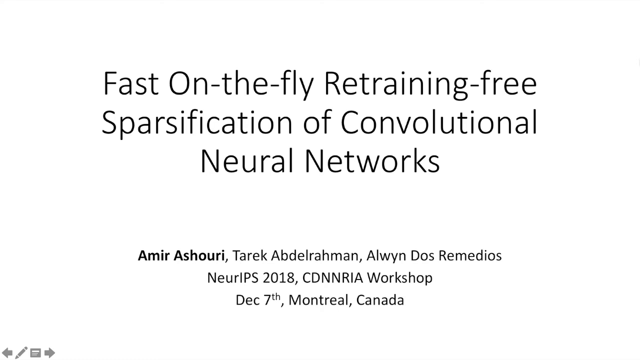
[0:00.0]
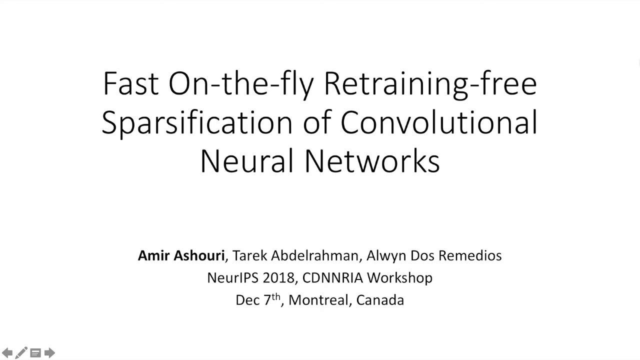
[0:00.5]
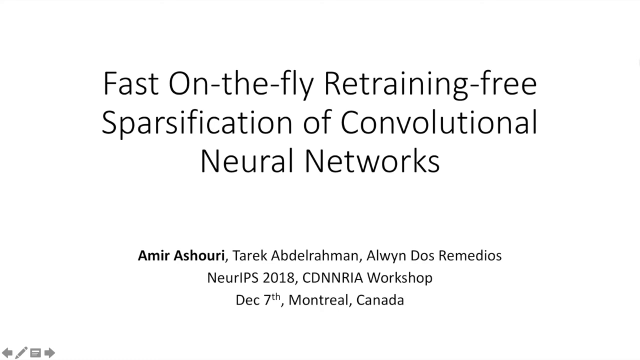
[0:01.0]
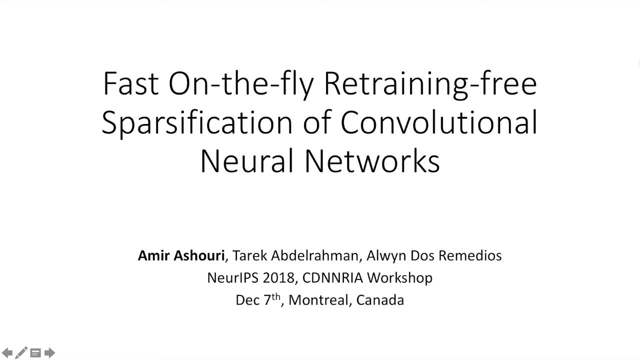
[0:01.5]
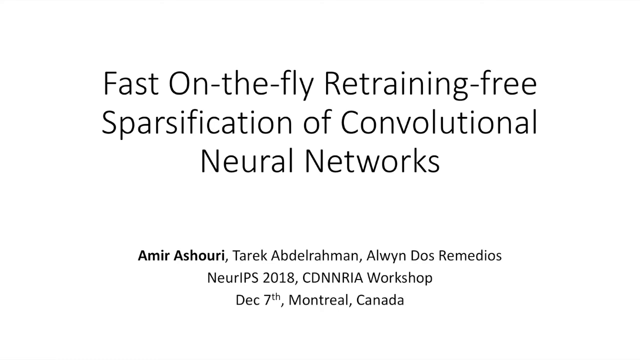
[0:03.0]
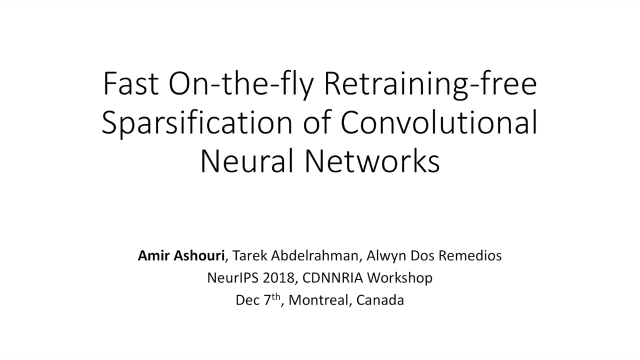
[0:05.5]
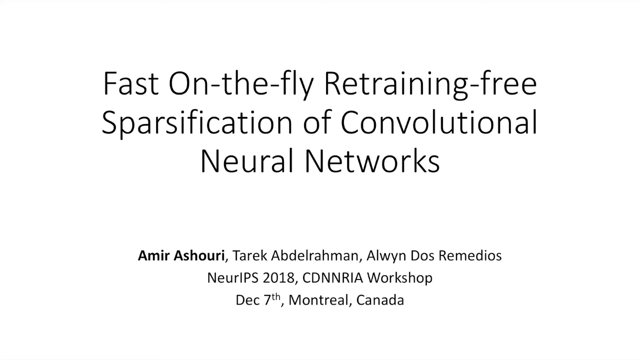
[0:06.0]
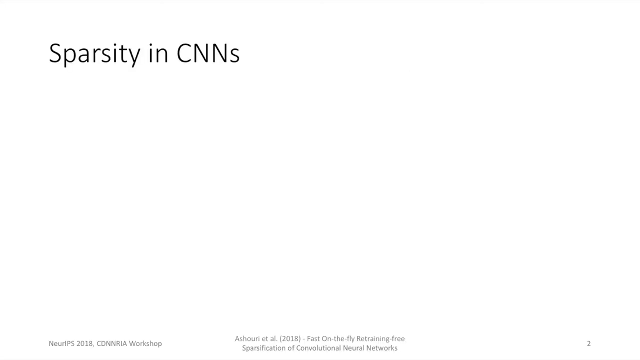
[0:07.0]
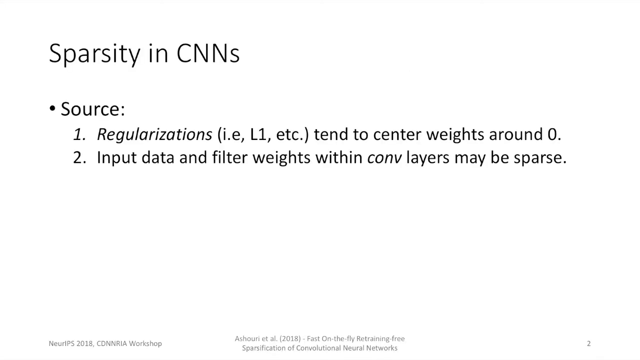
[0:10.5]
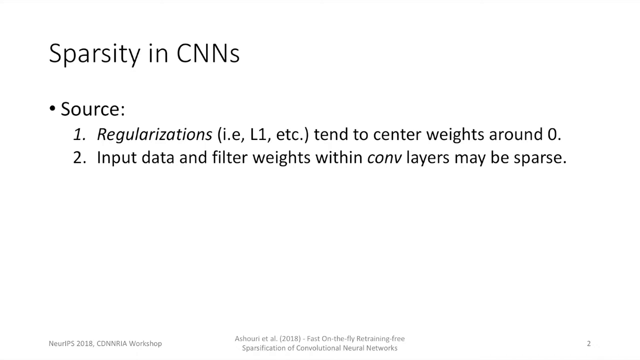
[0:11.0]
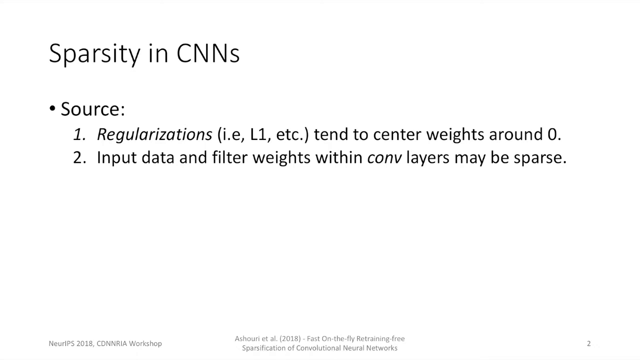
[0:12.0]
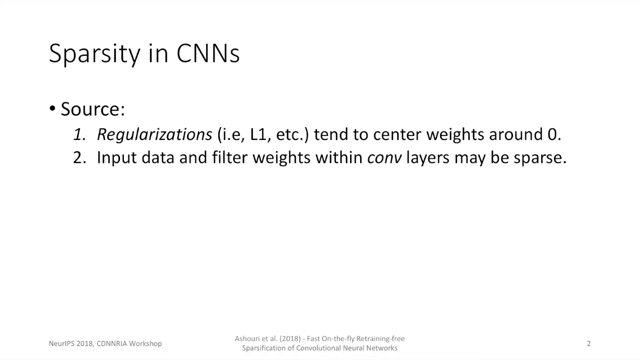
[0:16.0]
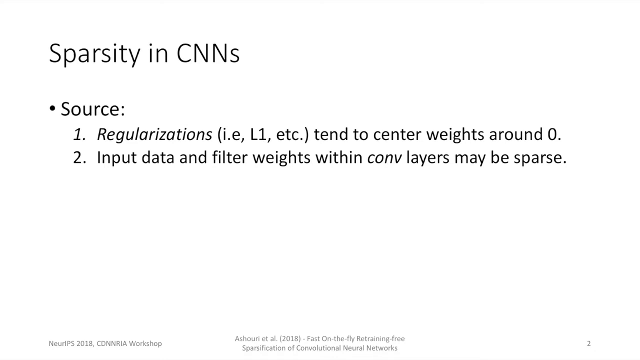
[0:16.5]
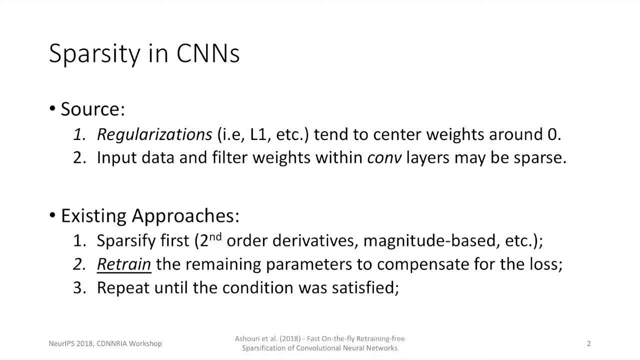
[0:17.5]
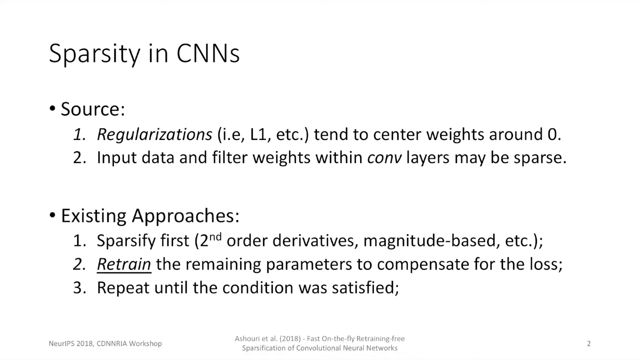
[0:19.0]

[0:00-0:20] The video opens on an all-white background with the words "fast on the fly, retraining free, specification of convolutional neural networks." Underneath, the names Amar, Ashuri, Tarek and Alwendos Remedios are written, along with the year 2018. Next comes a slide on sparsity in CNNs listing the sources: first, "regularizations tend to center weights around zero," and second, "input data and filter weights within convolutional layers may be sparse." Under existing approaches, the first is to specify first using second order derivatives, magnitude based and more; the second is to "retrain the remaining parameters to compensate for the loss"; and the third is to "repeat until the condition was satisfied." The presentation is from the CDNNRIA workshop on December 7th in Montreal, Canada. All the slides have a white background that turns light silver and then black toward the bottom, with the silver and black confined to the last fifth of the slide.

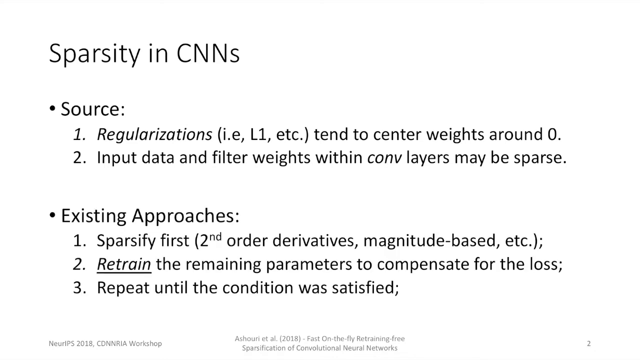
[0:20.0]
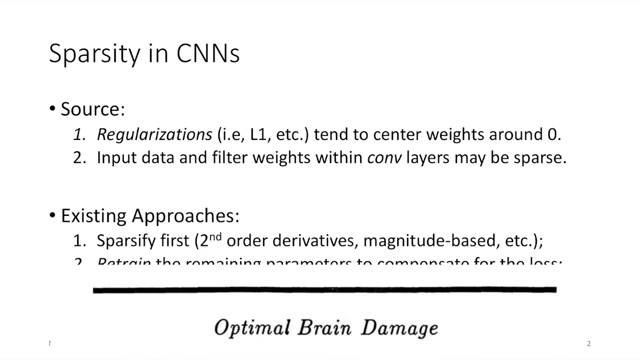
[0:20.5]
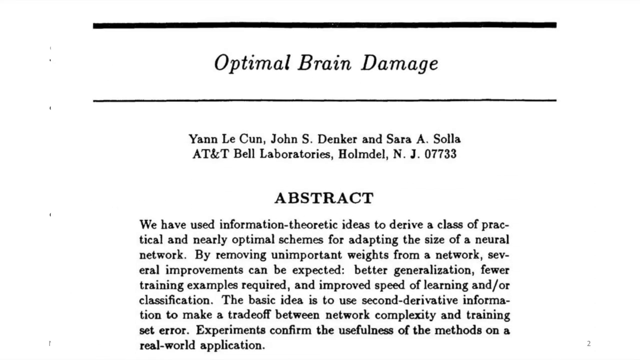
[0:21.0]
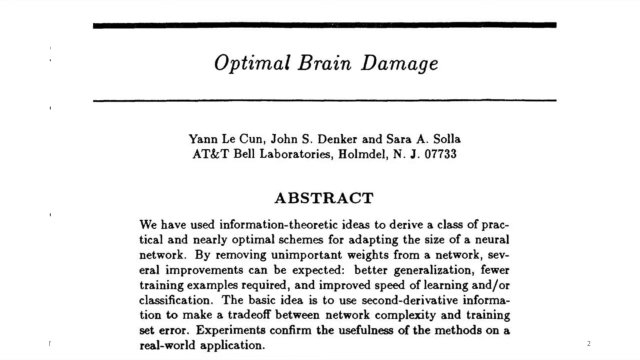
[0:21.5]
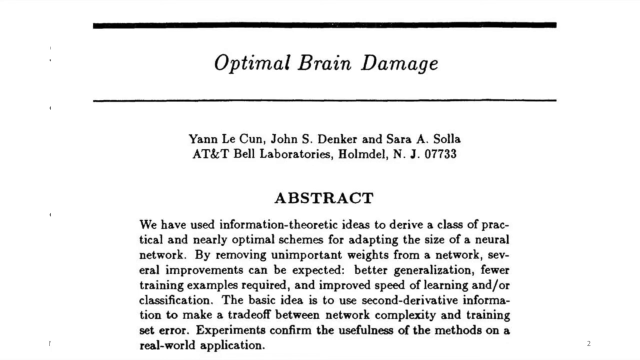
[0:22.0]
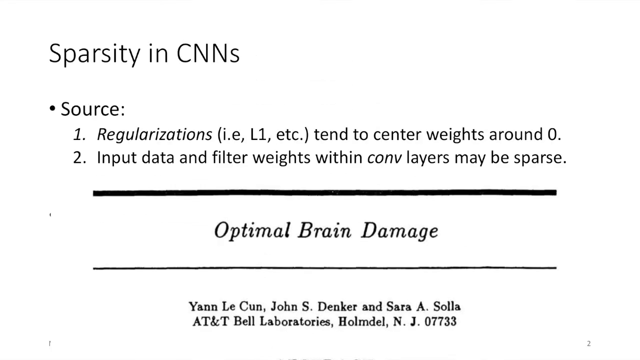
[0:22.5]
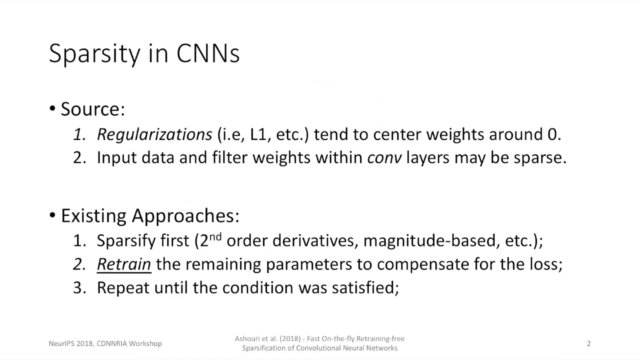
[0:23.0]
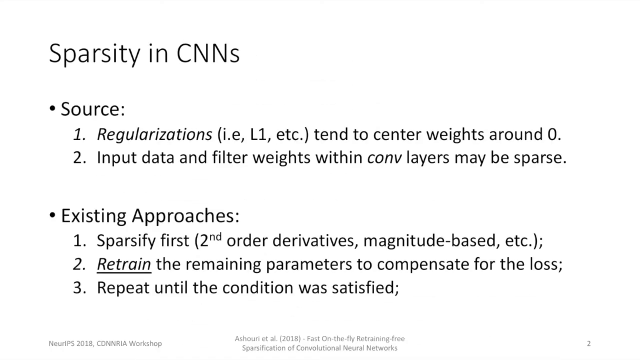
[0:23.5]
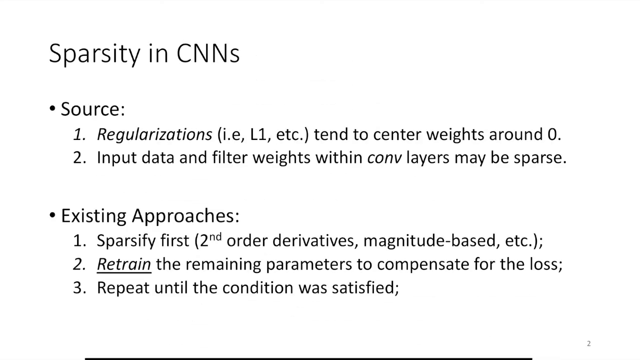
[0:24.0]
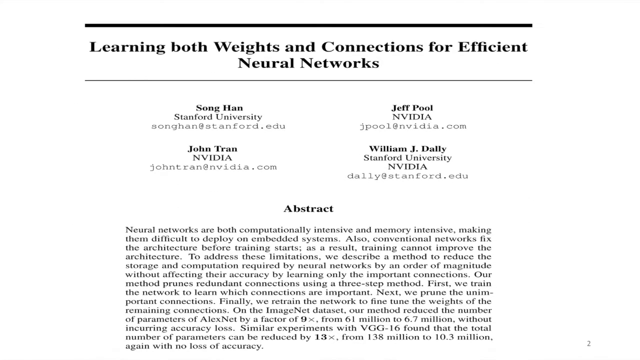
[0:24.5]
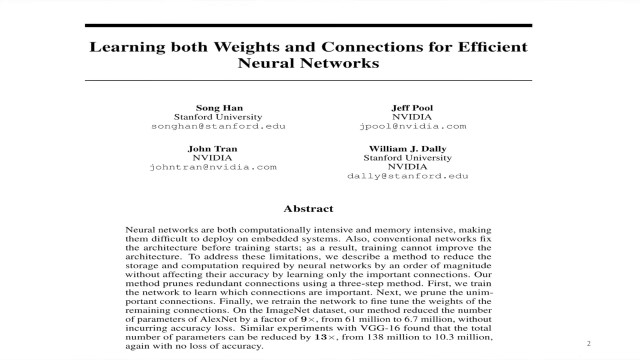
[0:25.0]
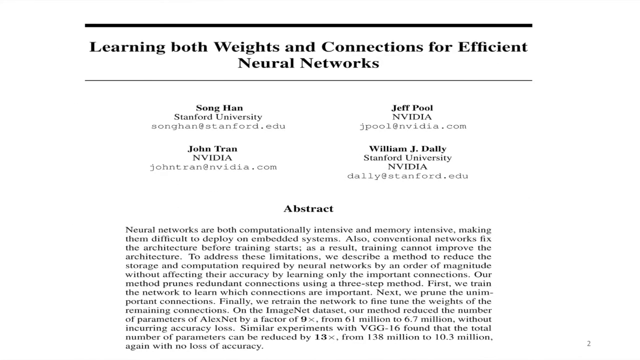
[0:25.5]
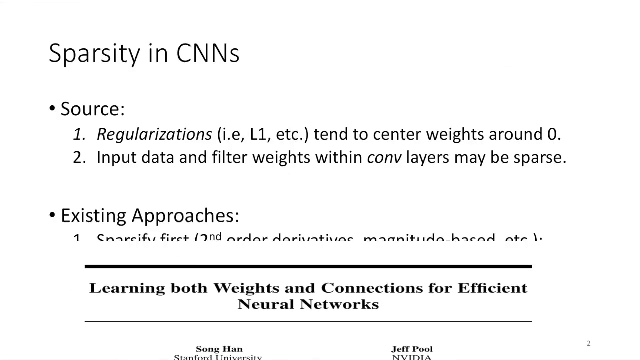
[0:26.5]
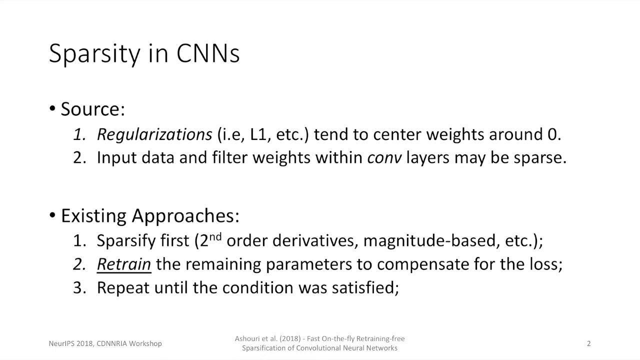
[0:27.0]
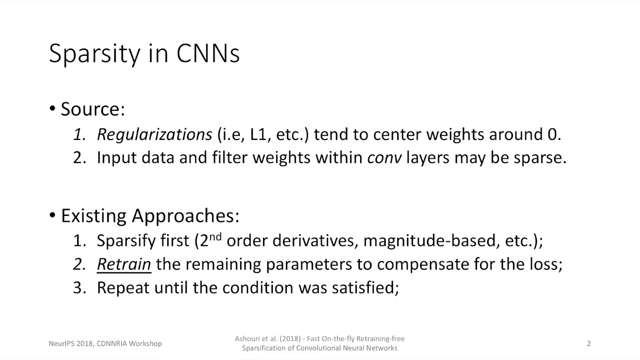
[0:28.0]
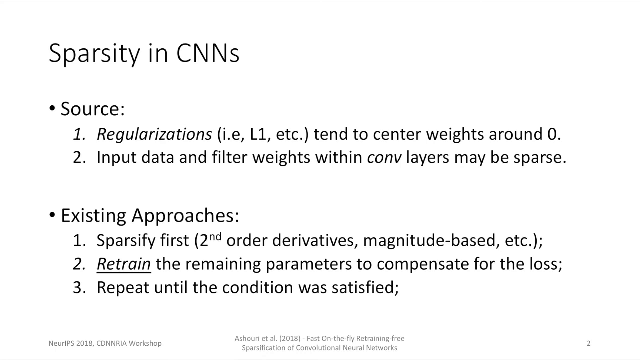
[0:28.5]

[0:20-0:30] A slide in dark black font covers specificity in CNNs. Its sources are regularizations, and input data and filter weights within convolutional layers that may be sparse. Under existing approaches, the first is to specify first using second order derivatives, magnitude based and more, the second is to retrain the remaining parameters to compensate for the loss, and the third is to repeat until the conditions are met. The next slide has the heading "optimal brain damage" and shows an abstract written in black on a white background. The abstract appears along with four authors. A page then carries the heading "learning both weights and connections for efficient neural networks."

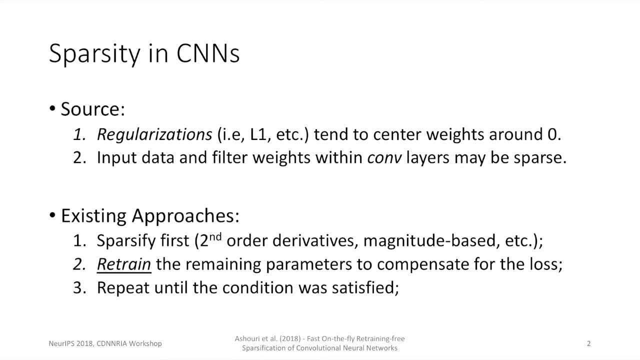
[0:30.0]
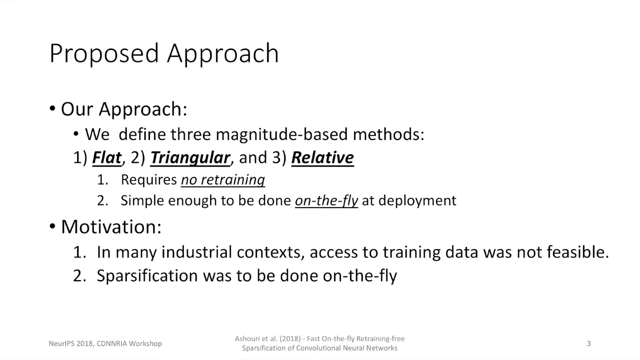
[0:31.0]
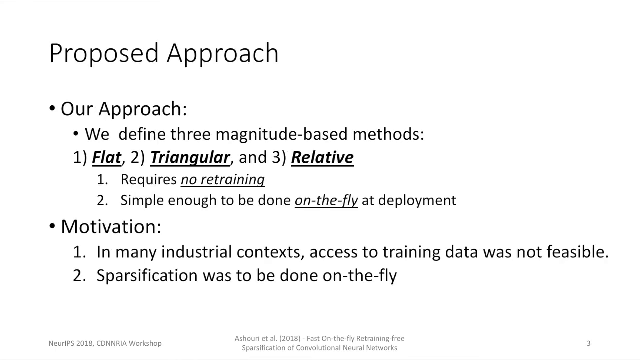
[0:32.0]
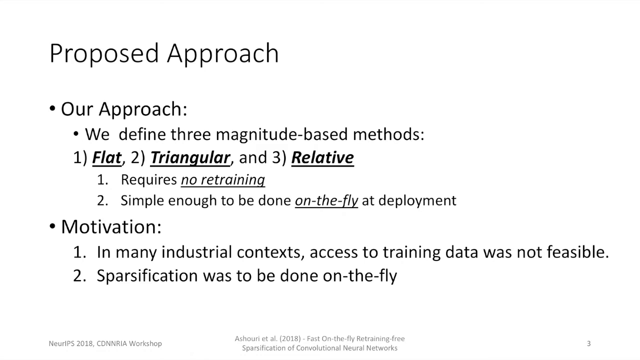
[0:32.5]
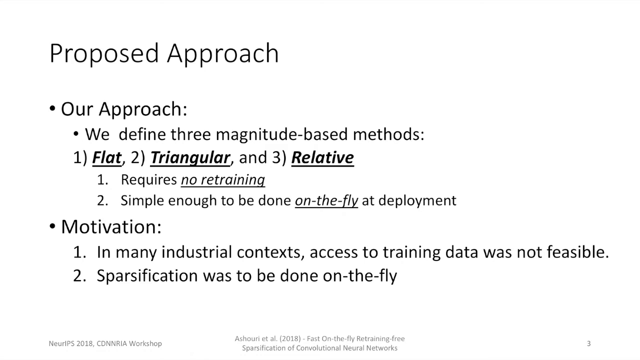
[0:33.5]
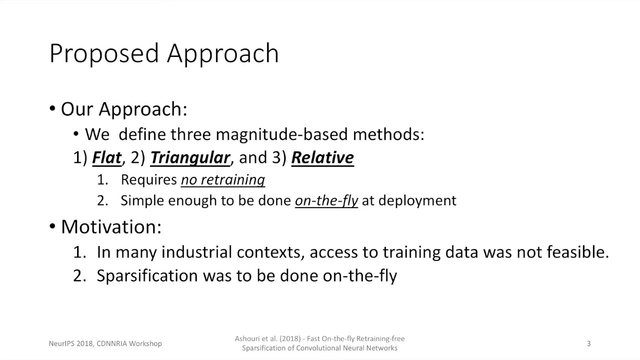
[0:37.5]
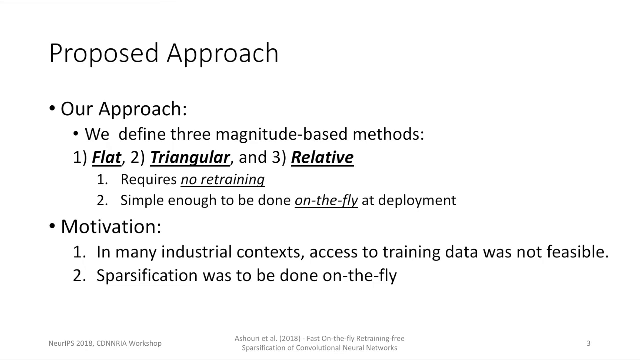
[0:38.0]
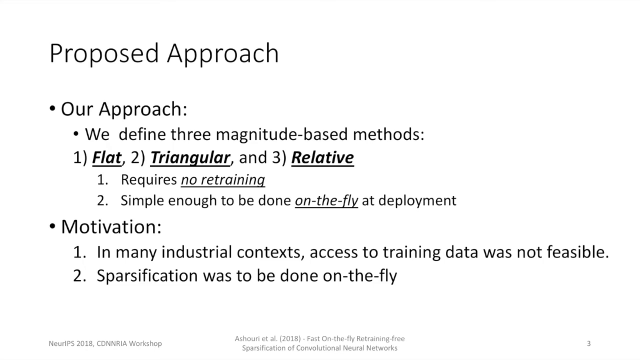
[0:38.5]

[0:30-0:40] The sparsity in CNNs slide lists its sources: "regularizations tend to center weights around zero" and "input data and filter weights within convolutional layers may be sparse." A second subheading, existing approaches, lists specifying first using second order derivatives, magnitude based and more; retraining the remaining parameters to compensate for the loss; and repeating until the condition was satisfied. The video then moves to proposed approaches. Under "our approach" it reads "we define three magnitude based methods": one is flat, two is triangular and three is relative. The explanations beneath say that it requires no retraining and is simple enough to be done on the fly at deployment. A second subheading, motivation, states that in many industrial contexts access to training data was not feasible and that specification was to be done on the fly. The page has a white background whose bottom turns silver and then a darker shade of black.